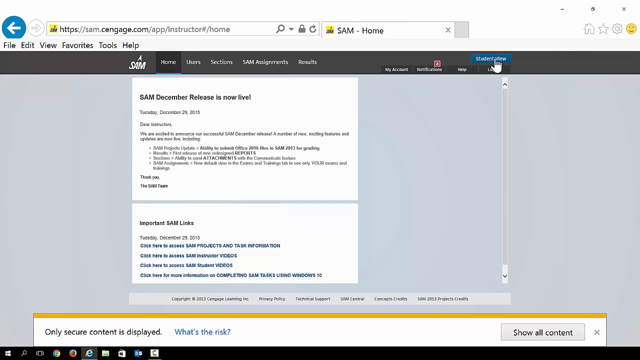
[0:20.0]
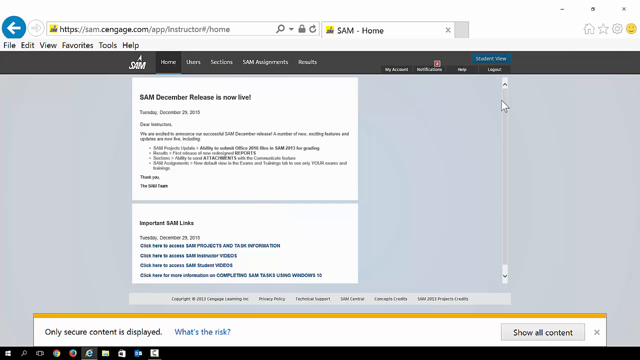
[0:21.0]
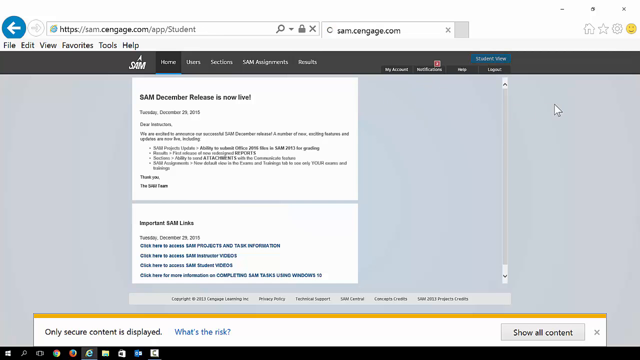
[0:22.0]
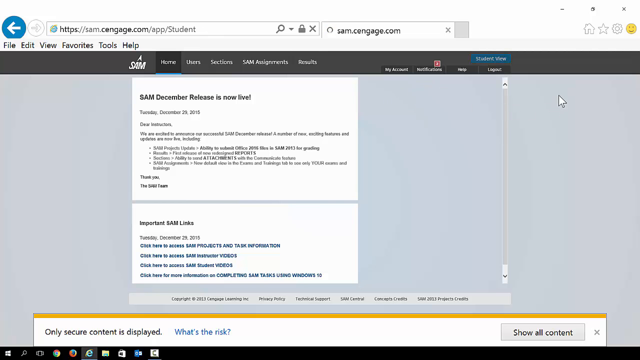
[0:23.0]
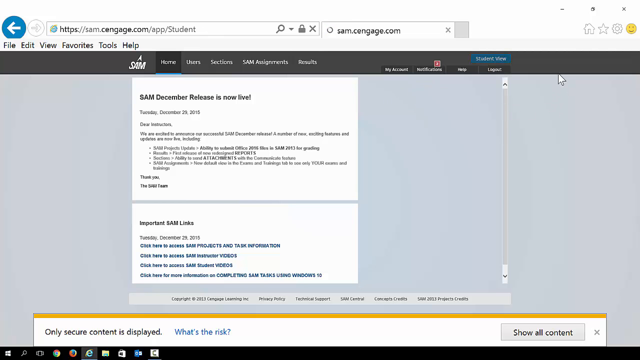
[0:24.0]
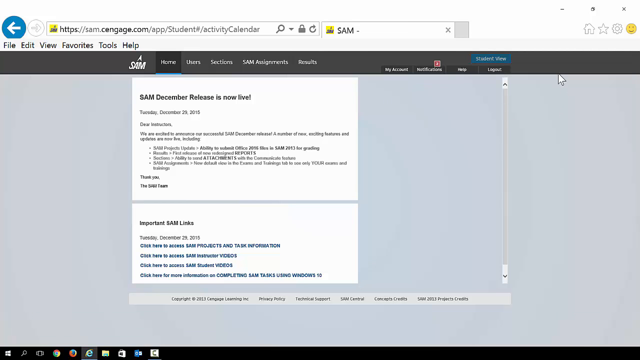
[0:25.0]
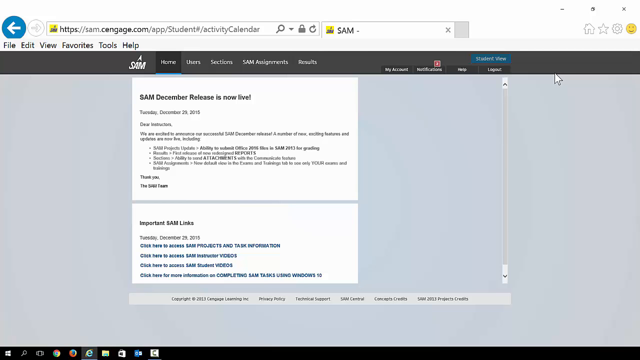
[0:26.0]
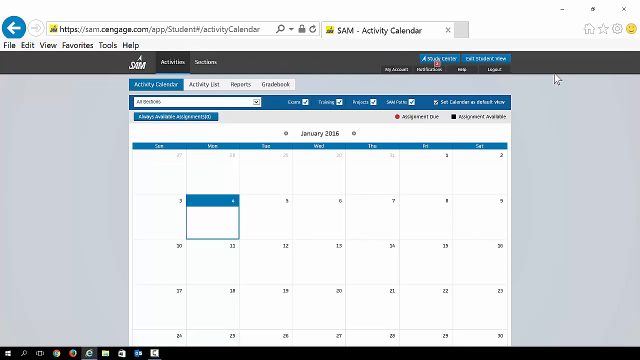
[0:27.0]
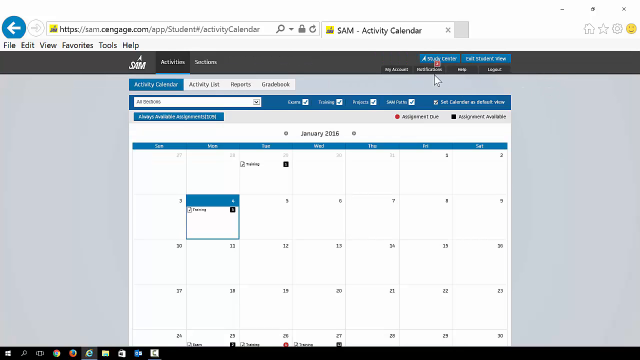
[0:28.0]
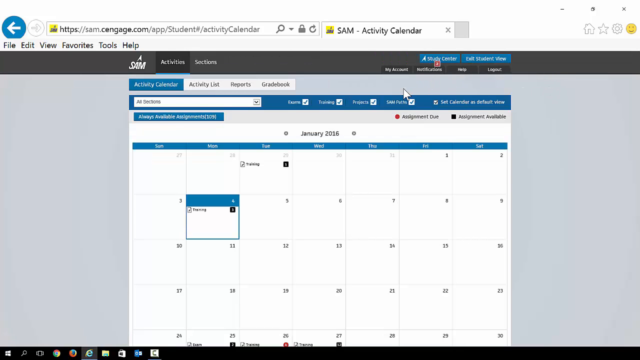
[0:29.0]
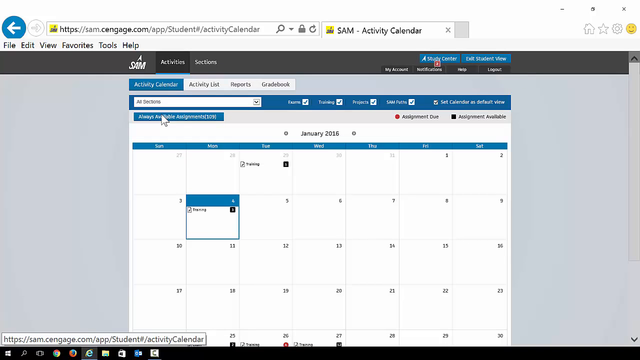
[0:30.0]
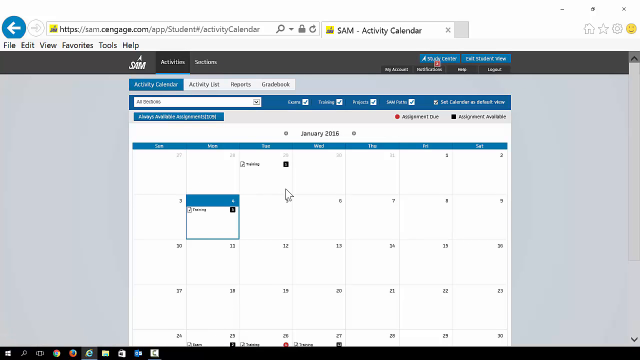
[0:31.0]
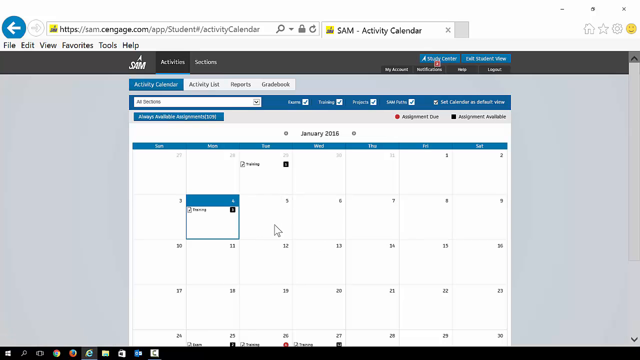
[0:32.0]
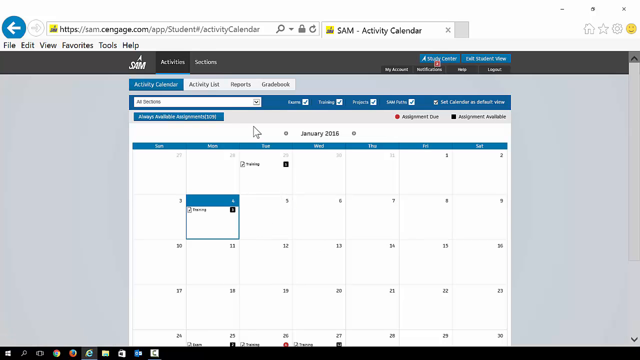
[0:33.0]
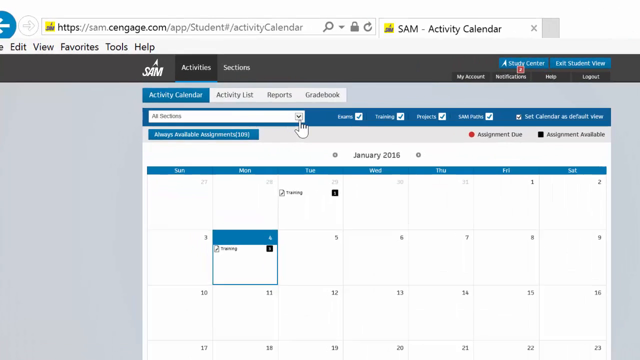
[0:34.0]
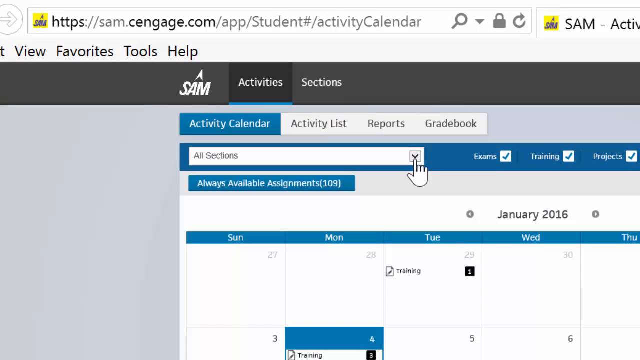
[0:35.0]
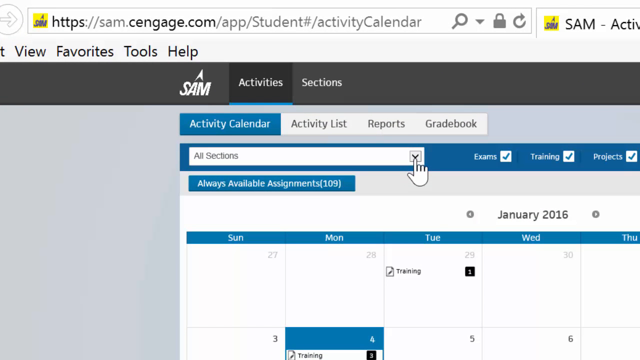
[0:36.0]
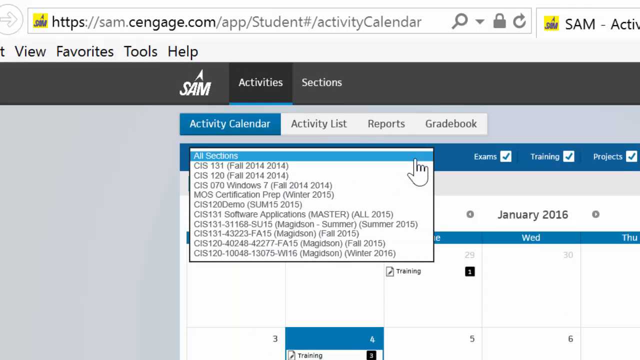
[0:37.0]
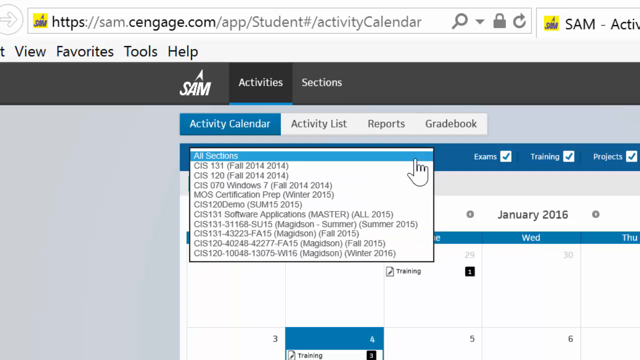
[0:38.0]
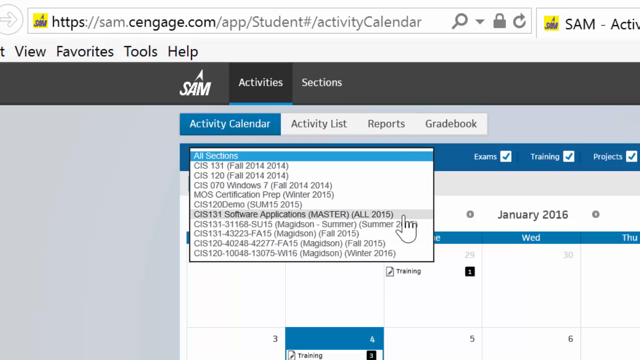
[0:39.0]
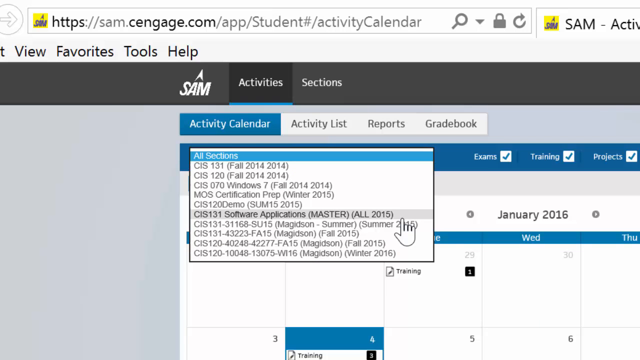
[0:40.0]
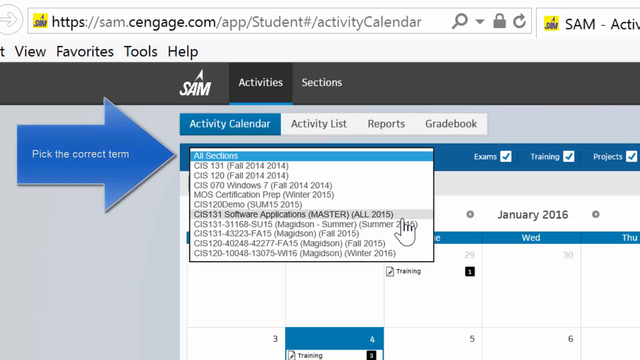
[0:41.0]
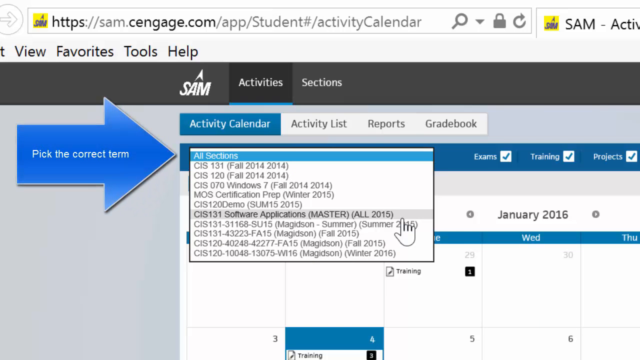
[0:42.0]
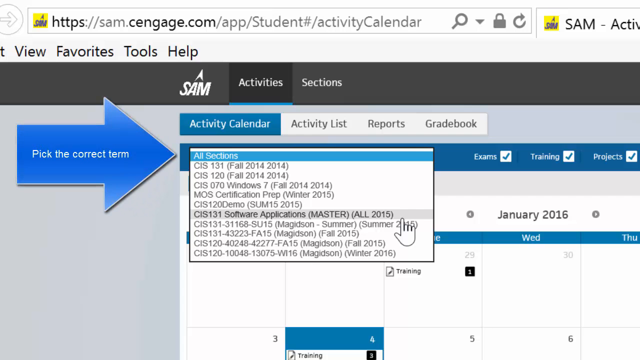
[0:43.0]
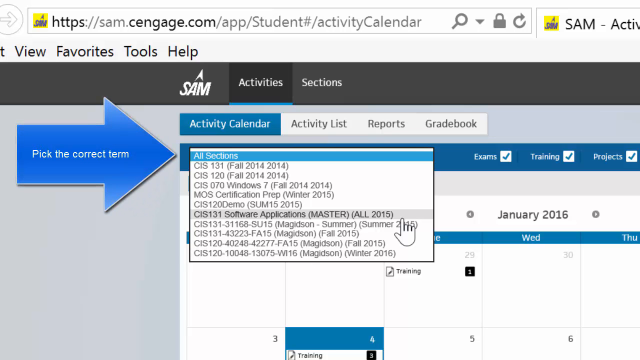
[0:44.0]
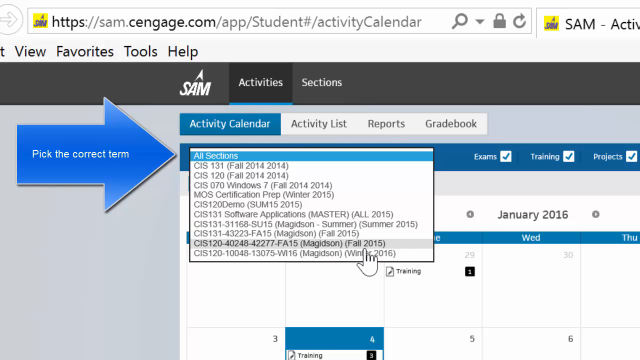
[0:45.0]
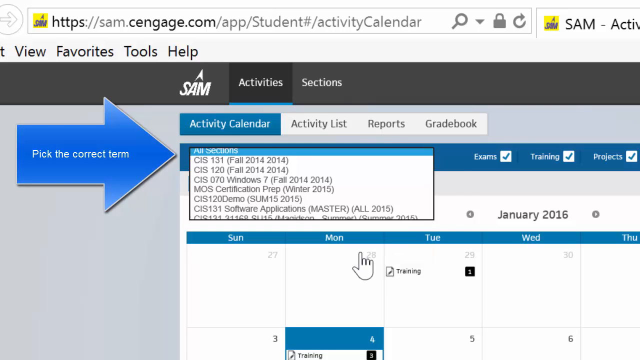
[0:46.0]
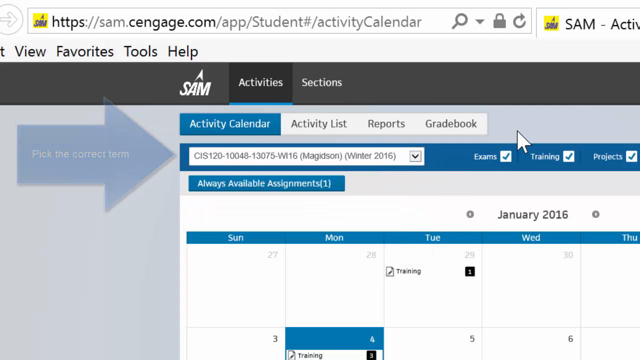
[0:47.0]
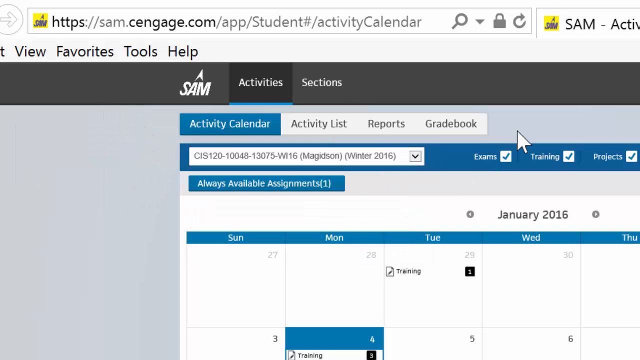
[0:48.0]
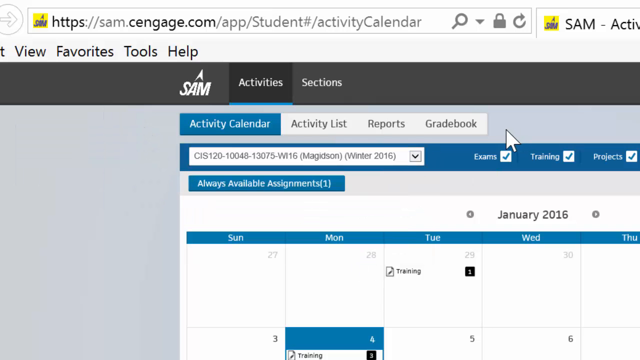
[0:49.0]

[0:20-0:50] A web page is recorded on screen. In its upper part is a dark rectangular banner, probably dark gray, containing menu items written in a white font and placed next to each other. After a few seconds a page appears that looks like a calendar: a white page with square tiles inside. One tile has a blue border and a thicker rectangular part at the top. The cursor moves around inside this white rectangle. In the last seconds there is a zoom into the upper left portion of the web page, and a menu bar opens showing a number of options. The cursor moves over these options, and each option is highlighted in blue when the cursor is above it.